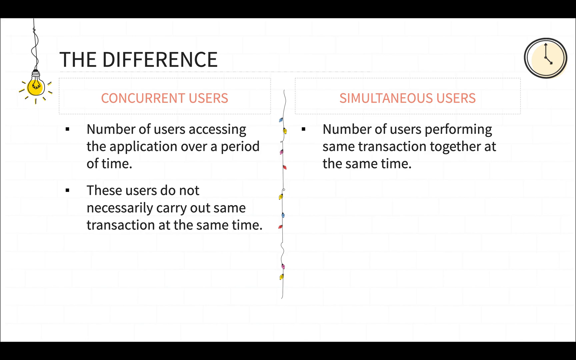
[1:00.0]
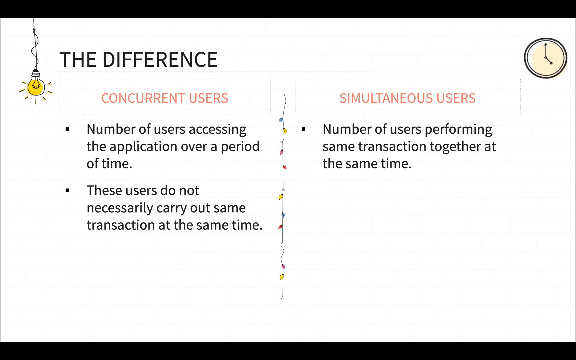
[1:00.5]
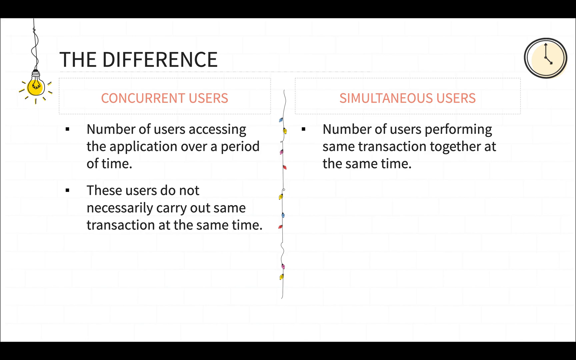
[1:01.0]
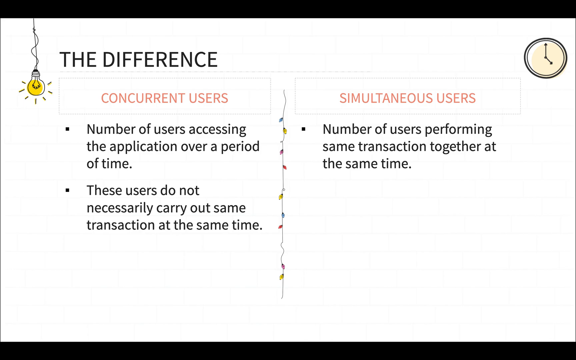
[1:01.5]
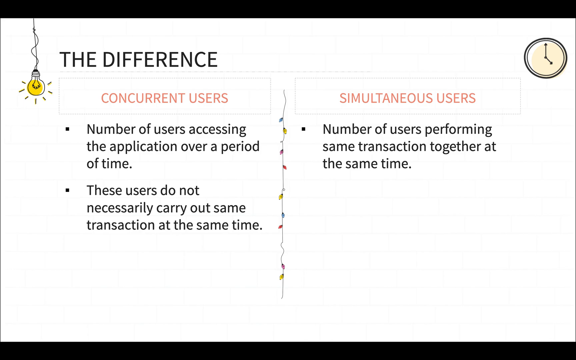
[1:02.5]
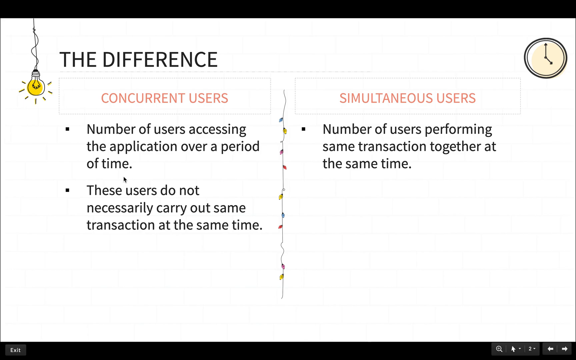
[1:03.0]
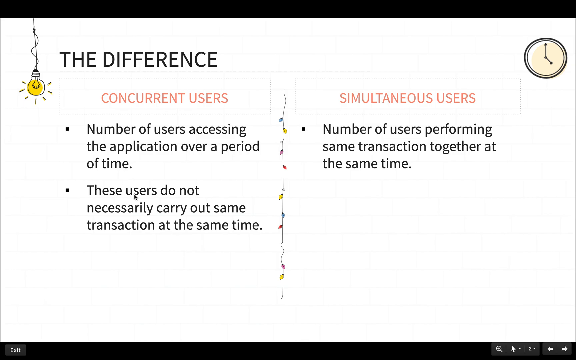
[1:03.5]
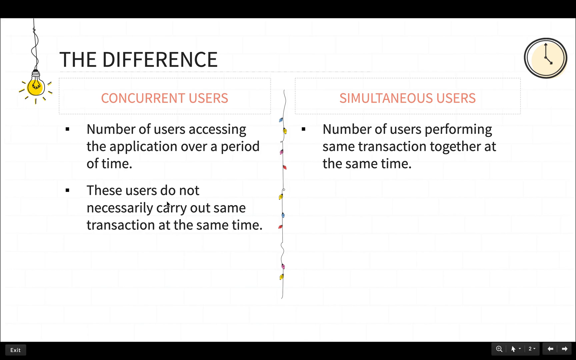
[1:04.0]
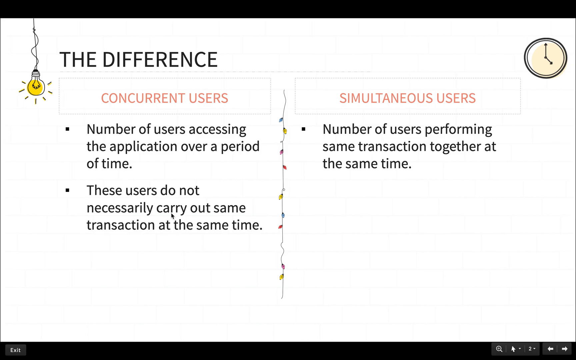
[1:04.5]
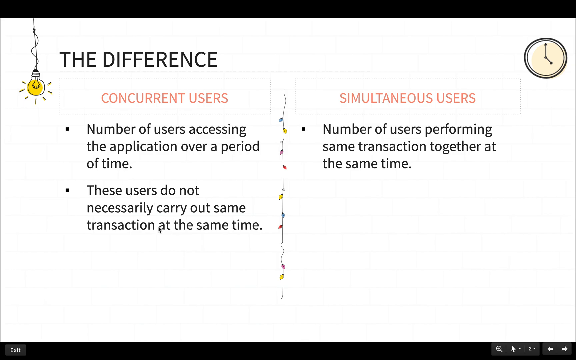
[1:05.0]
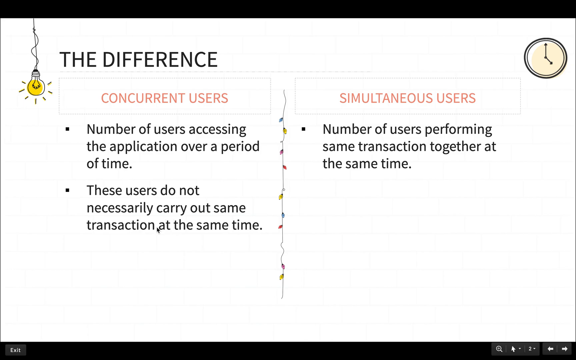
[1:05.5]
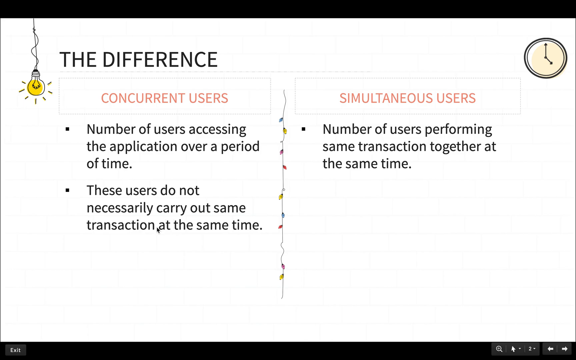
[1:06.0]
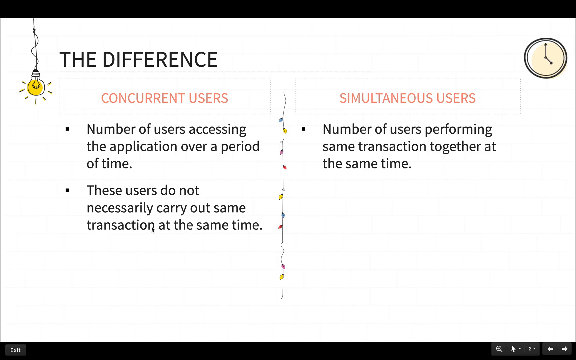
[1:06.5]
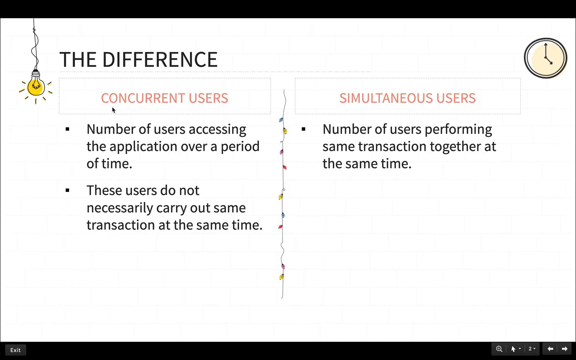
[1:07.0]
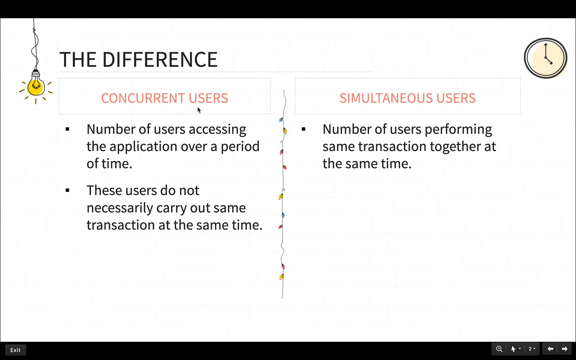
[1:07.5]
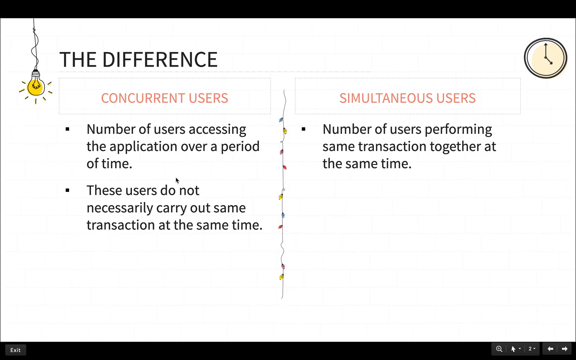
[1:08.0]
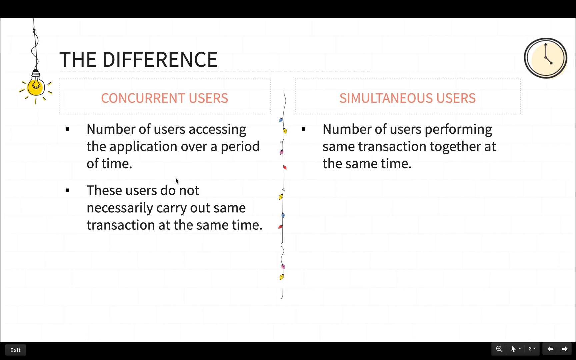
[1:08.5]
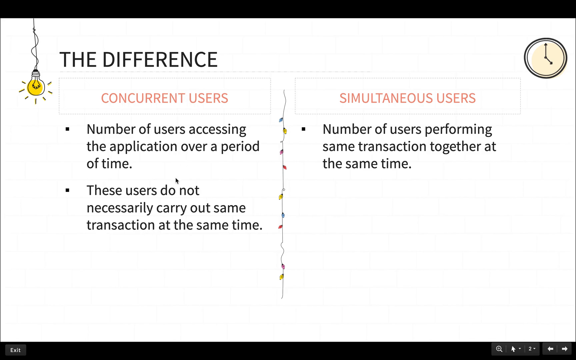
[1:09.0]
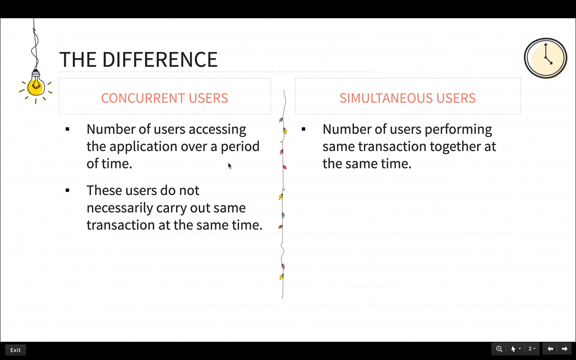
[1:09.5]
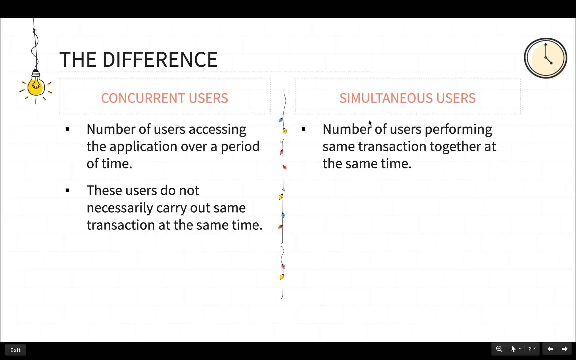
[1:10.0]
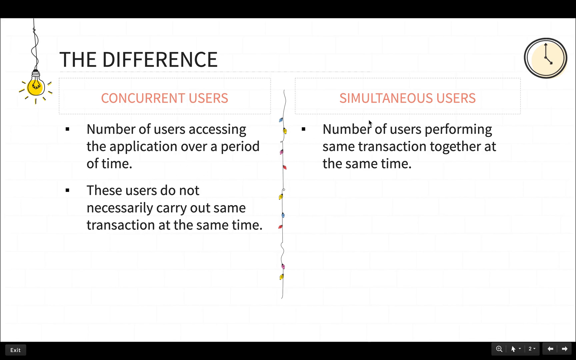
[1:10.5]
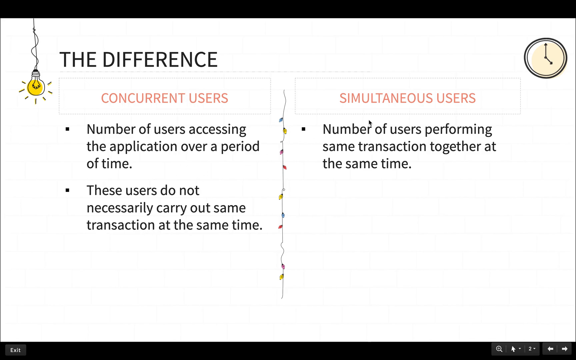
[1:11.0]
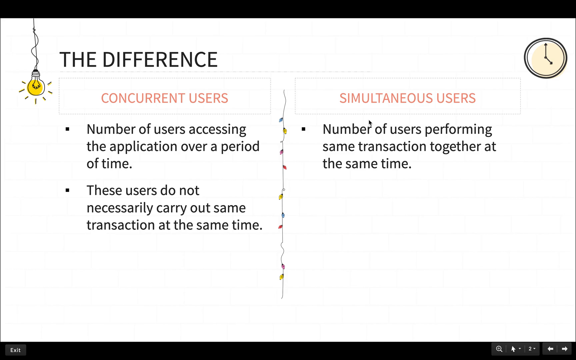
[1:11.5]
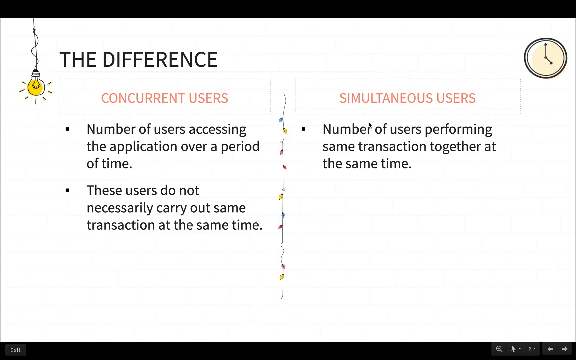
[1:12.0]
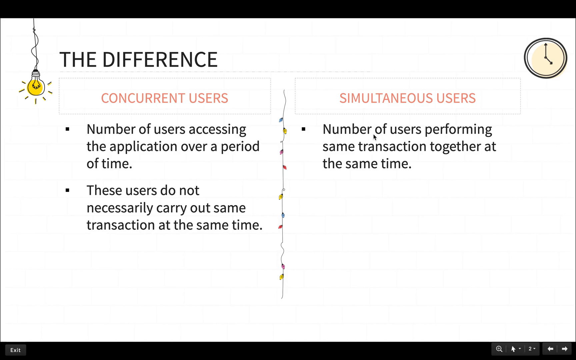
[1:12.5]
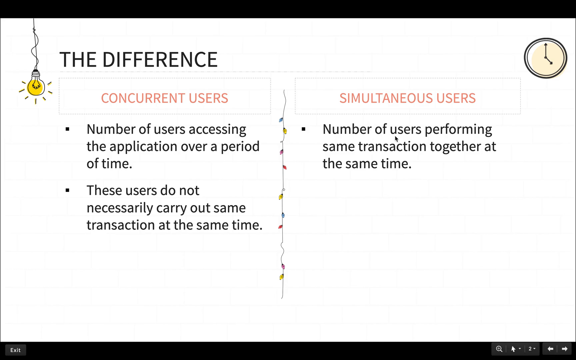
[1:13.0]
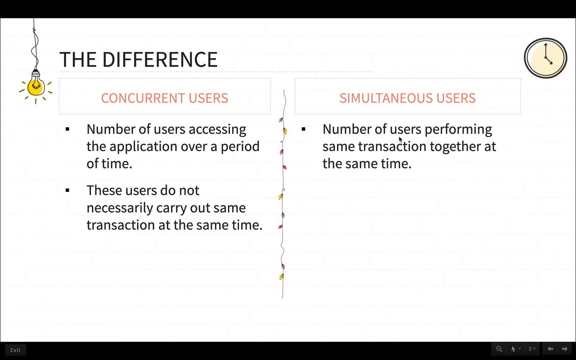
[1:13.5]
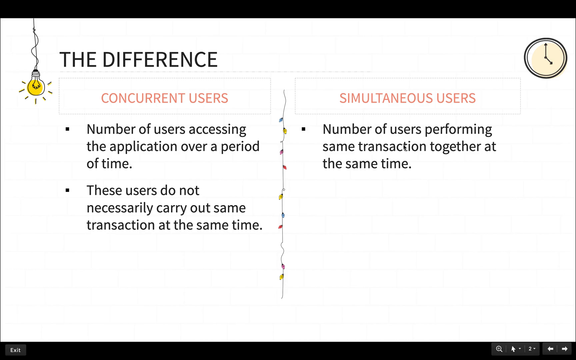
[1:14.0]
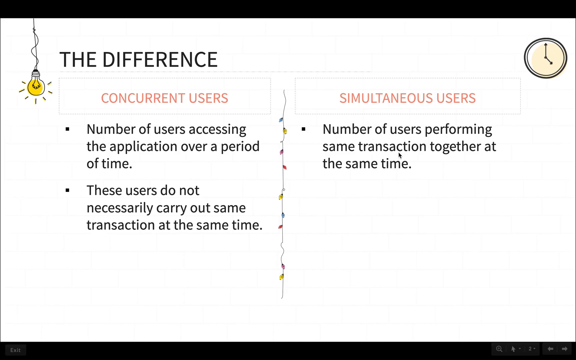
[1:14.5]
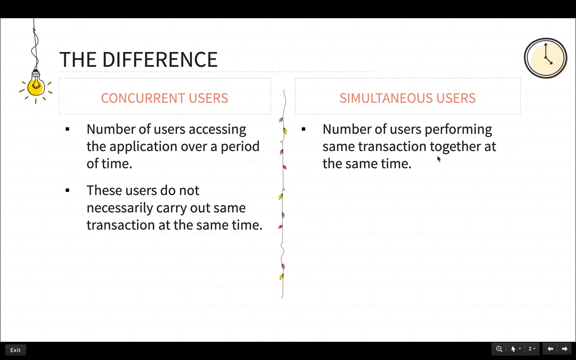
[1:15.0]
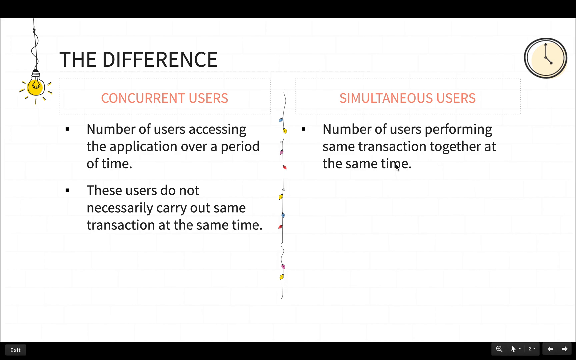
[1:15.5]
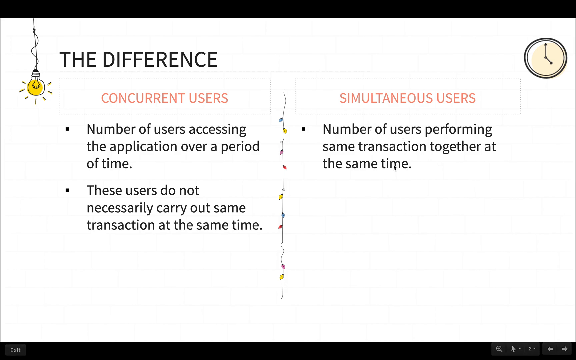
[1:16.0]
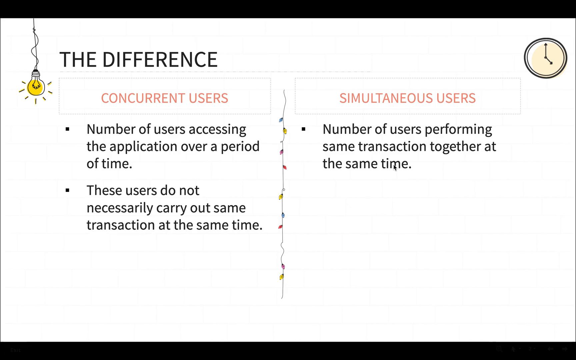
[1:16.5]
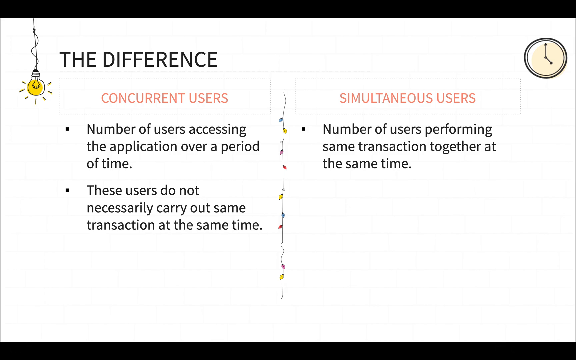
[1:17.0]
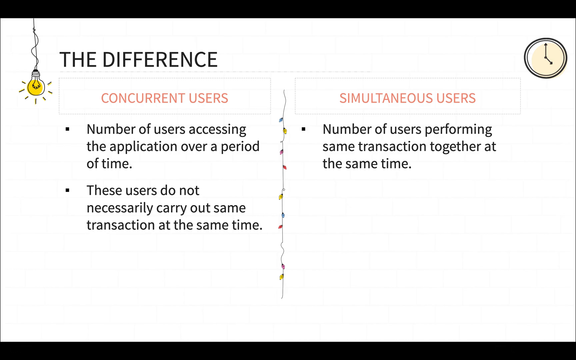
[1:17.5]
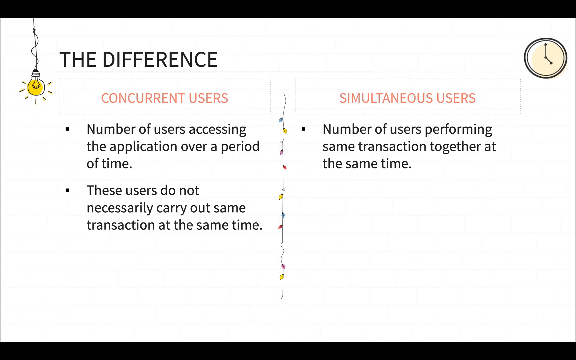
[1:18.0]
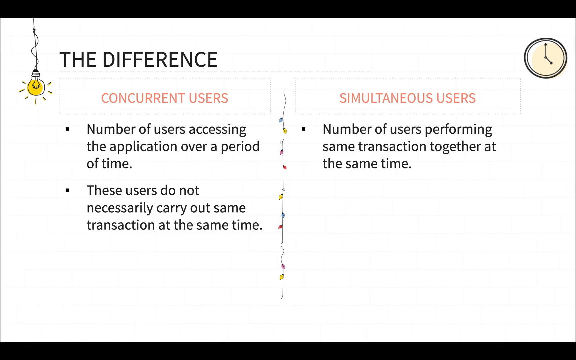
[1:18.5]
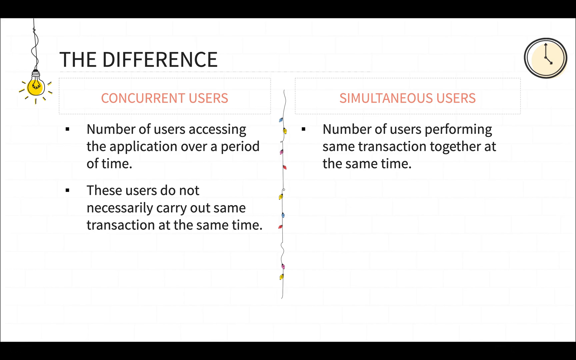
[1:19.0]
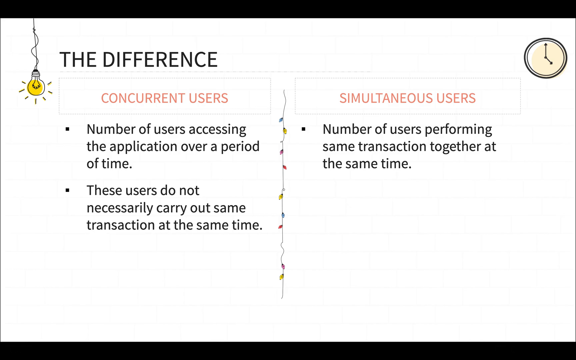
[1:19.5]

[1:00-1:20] The slide defines concurrent users as the "number of users accessing the application over a period of time" who "do not necessarily carry out the same transaction at the same time," and simultaneous users as the "number of users performing the same transaction together at the same time." A cursor moves around the words "concurrent users," then over to "simultaneous users," kind of going around the letters and words. Nothing else happens. The background is white, with a clock, a light bulb and ivy hanging down. The font is black except for the words "concurrent users" and "simultaneous users," which are sort of a light orange. The clock is light yellow and the light bulb is yellow.